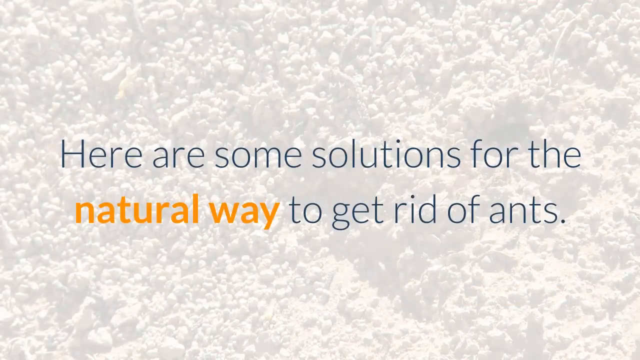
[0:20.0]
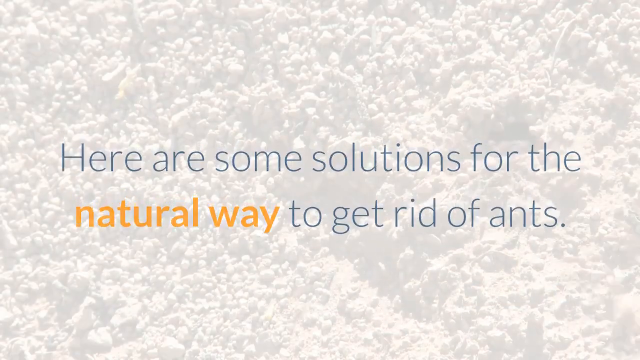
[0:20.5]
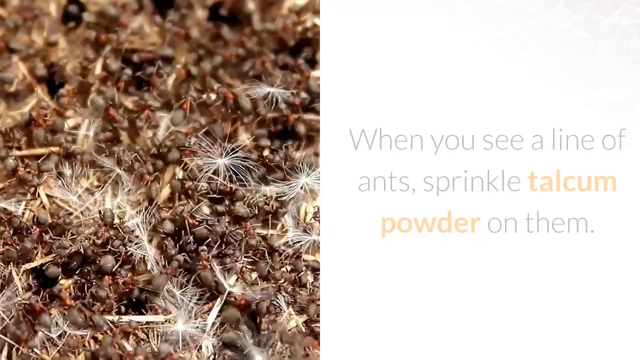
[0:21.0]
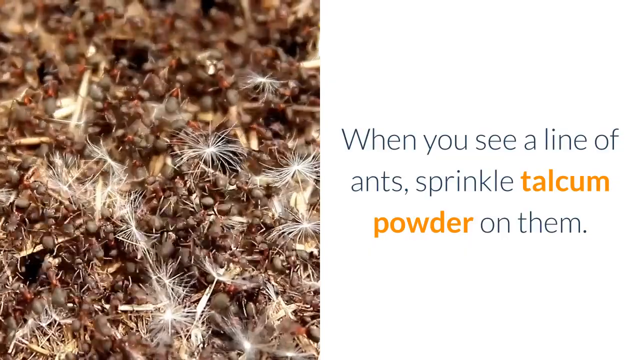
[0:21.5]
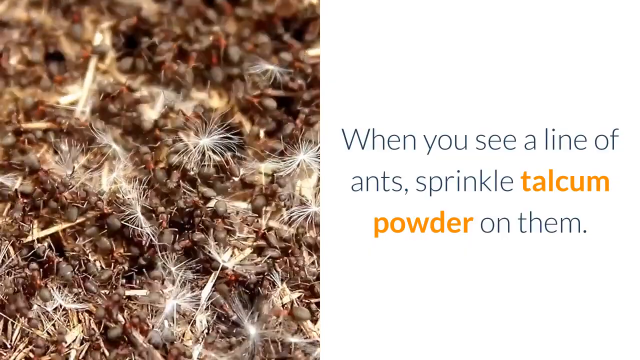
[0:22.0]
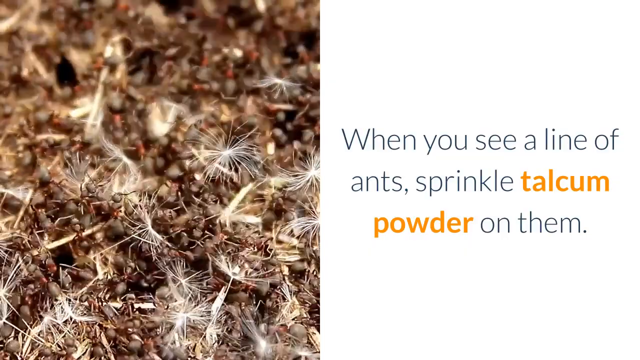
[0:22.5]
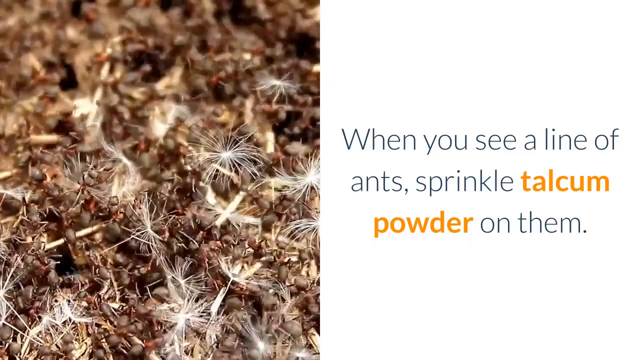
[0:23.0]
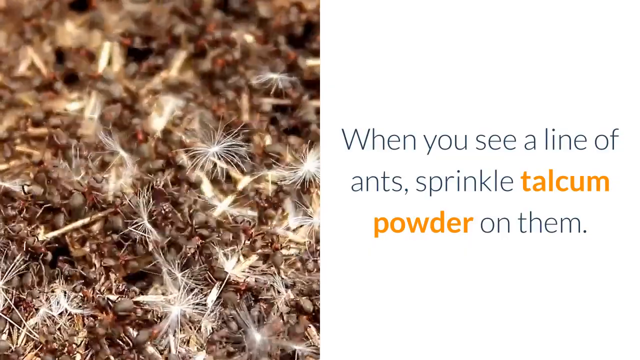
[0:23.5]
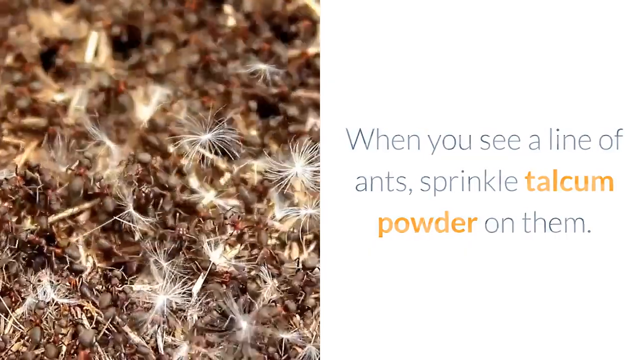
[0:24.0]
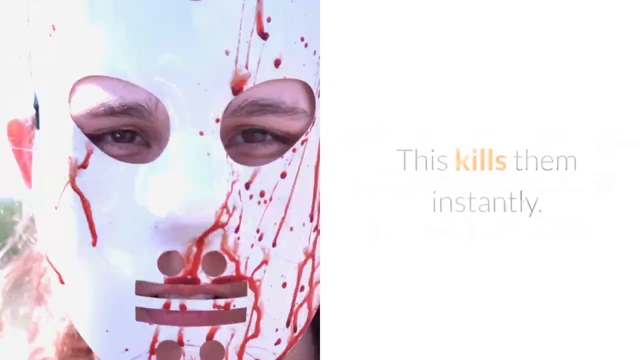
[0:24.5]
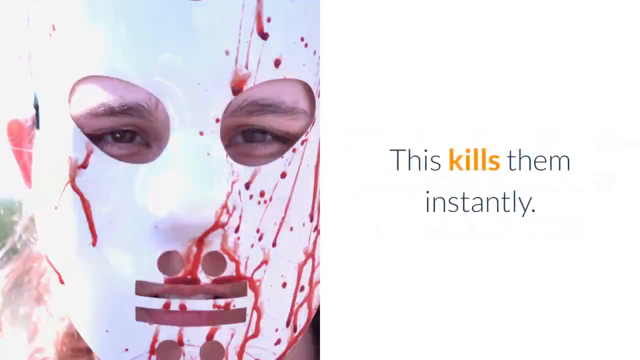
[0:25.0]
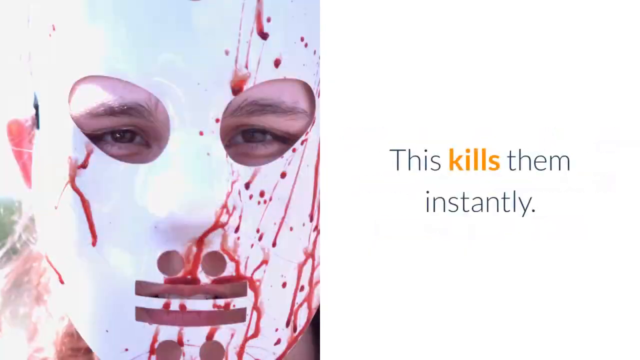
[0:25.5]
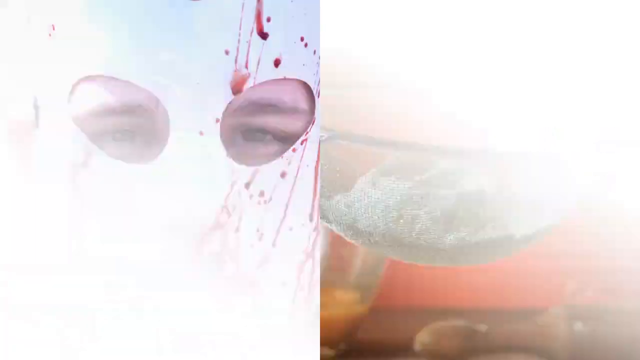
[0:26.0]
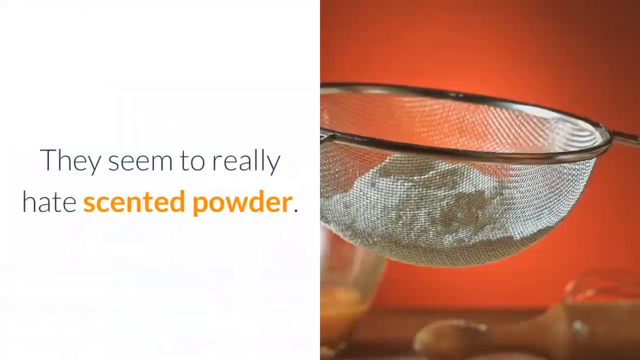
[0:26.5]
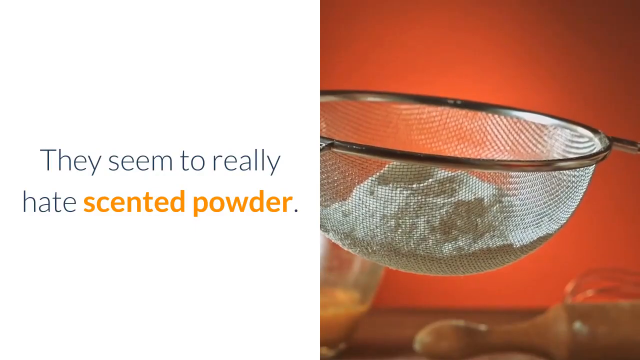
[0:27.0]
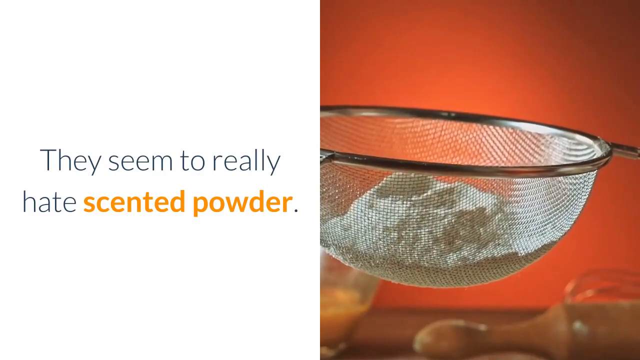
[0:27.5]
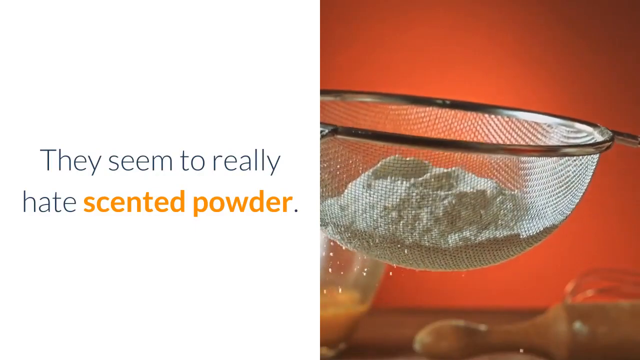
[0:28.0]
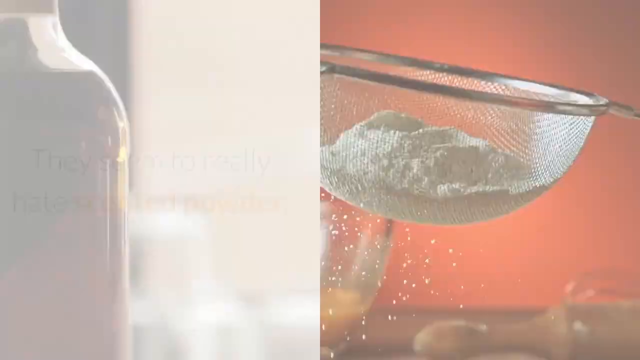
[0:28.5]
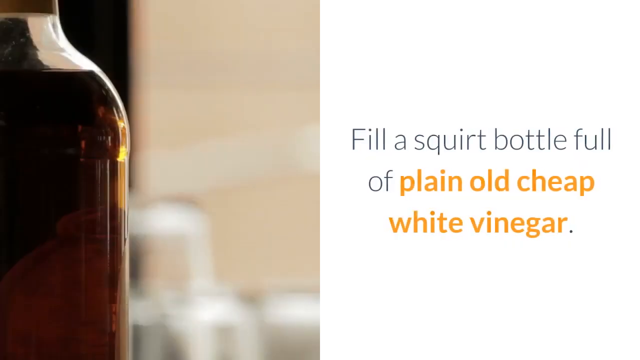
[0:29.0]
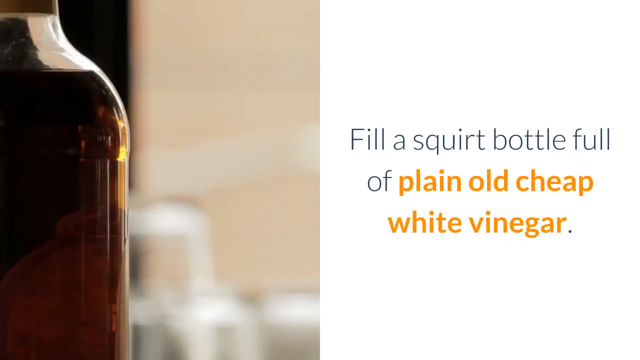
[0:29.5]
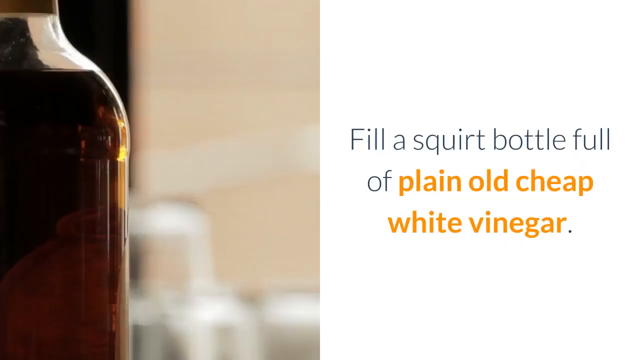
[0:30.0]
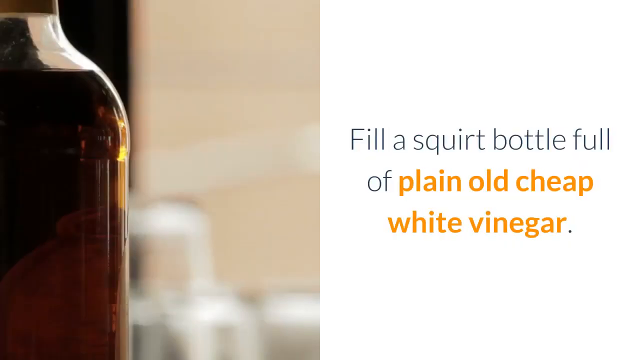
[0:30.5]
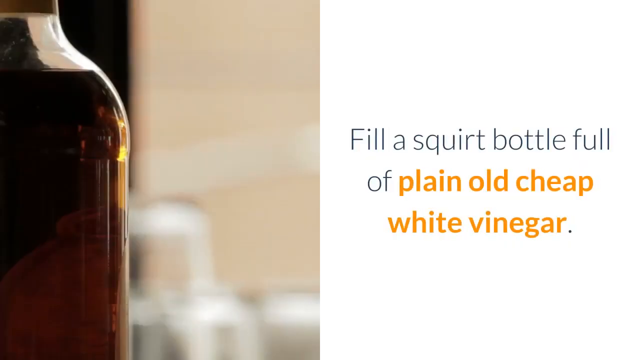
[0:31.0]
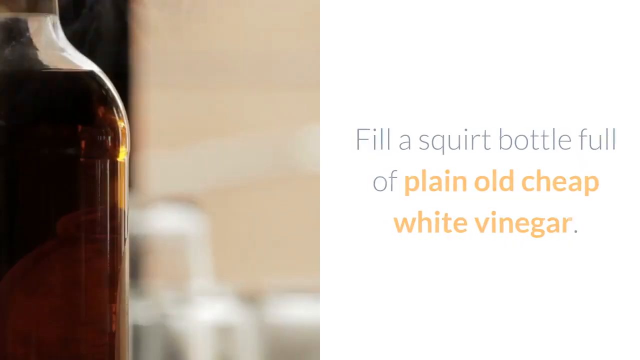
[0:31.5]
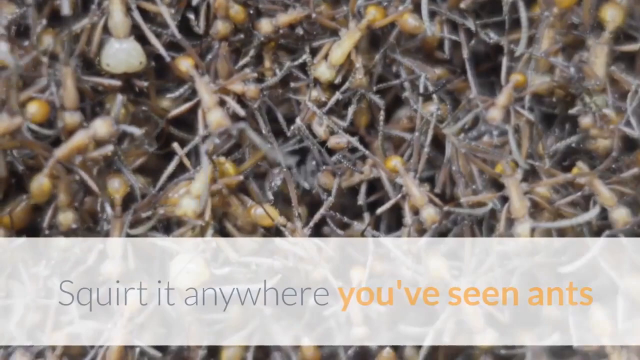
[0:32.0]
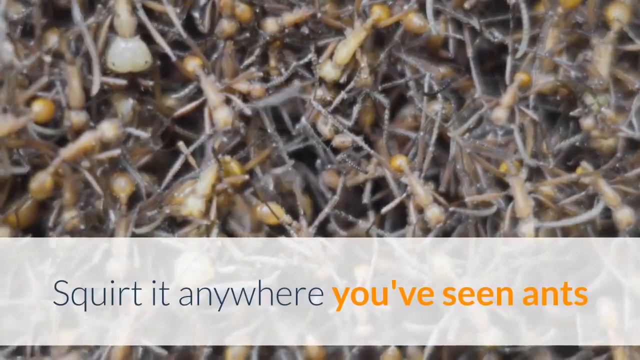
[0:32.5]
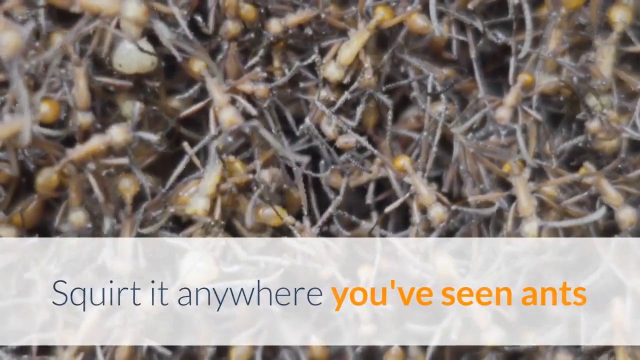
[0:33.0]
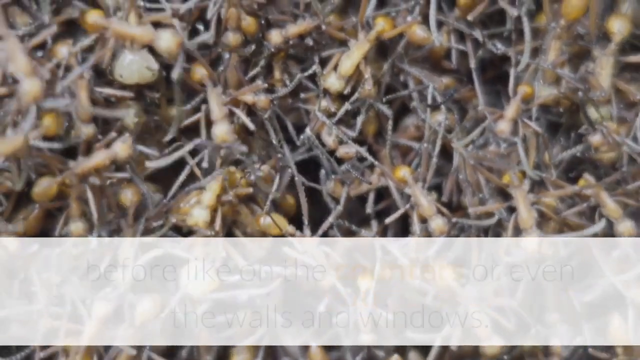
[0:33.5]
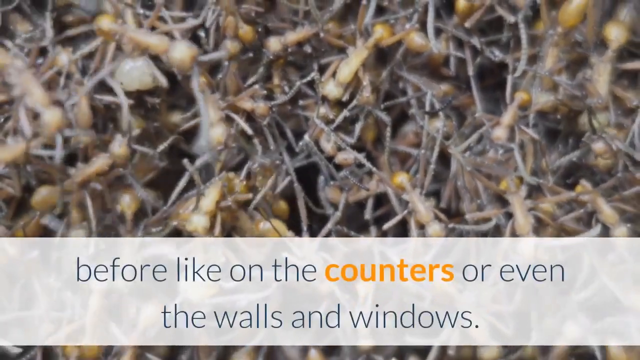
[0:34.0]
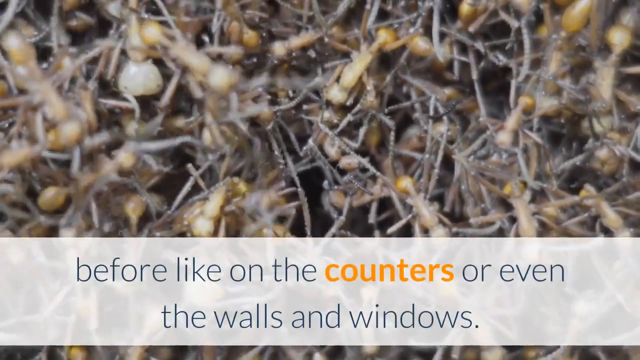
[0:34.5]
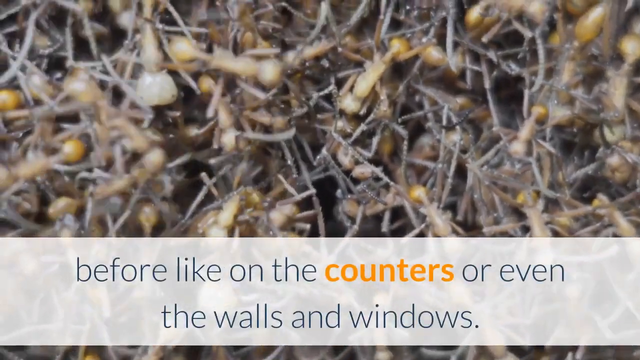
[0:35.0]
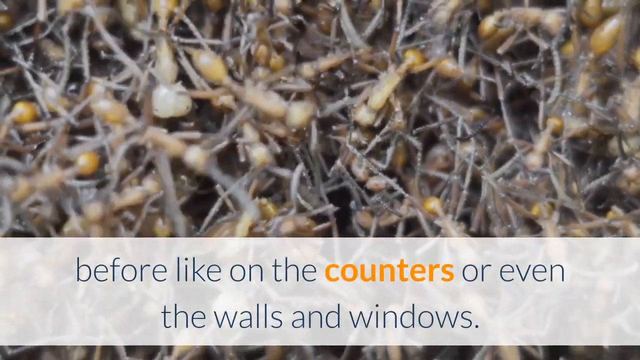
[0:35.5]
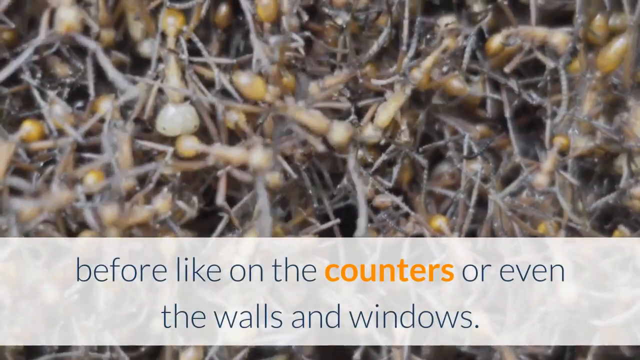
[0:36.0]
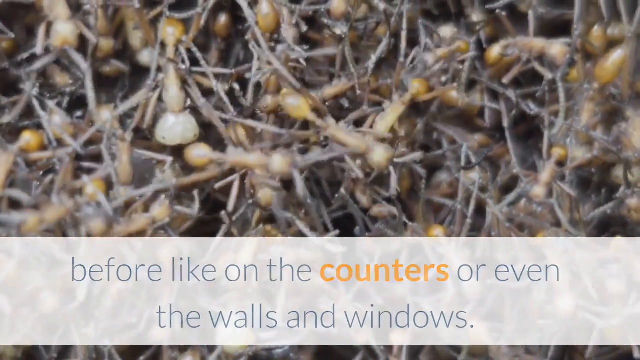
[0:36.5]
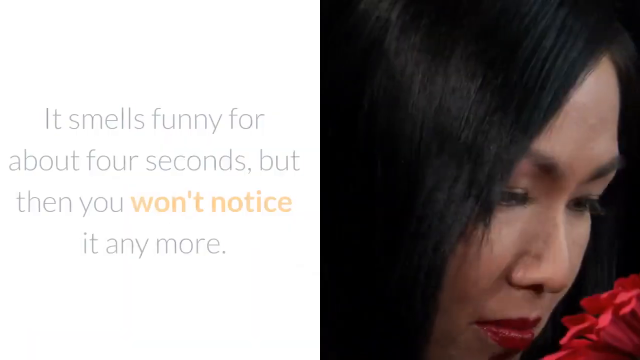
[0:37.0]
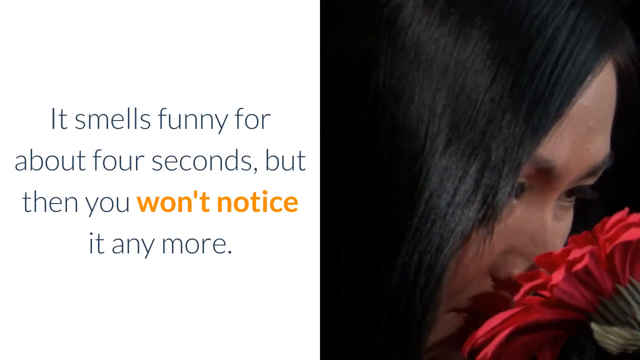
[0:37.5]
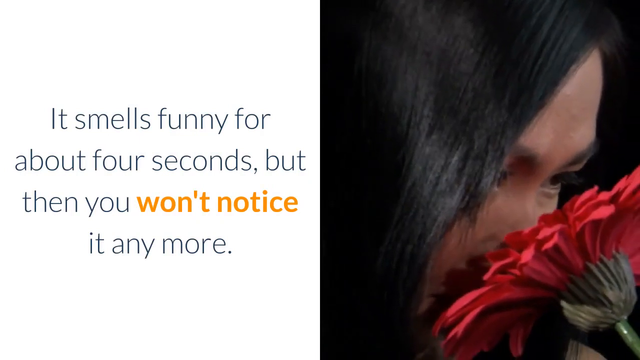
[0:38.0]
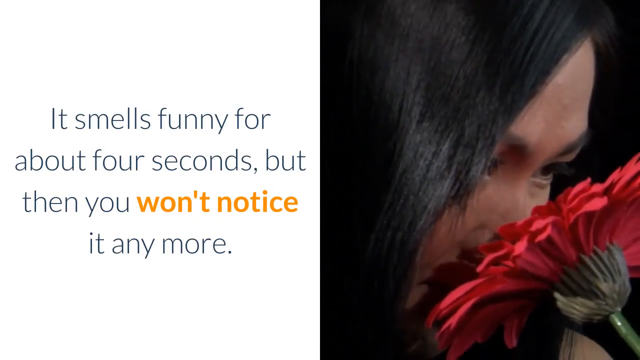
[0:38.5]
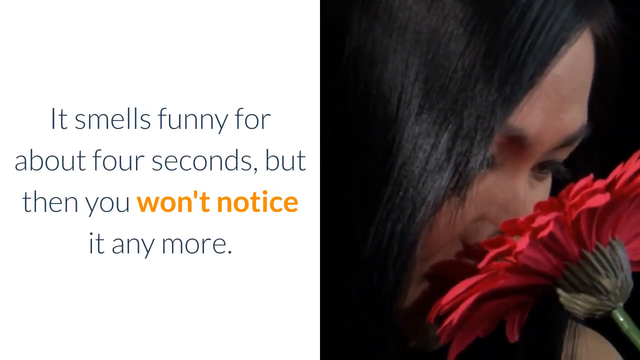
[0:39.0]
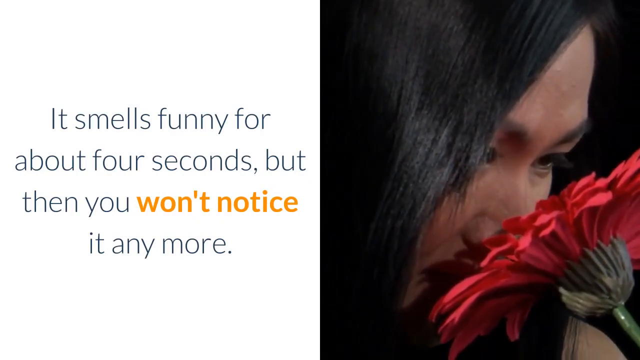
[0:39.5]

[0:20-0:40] A background that looks like dirt is so faded out that it appears almost white. In front, blue text reads "here are some solutions for the natural way to get rid of ants," with "natural way" bold and orange. Ants crawl on the left half of the screen while the right side is a white background with text. A line of ants has talcum powder sprinkled on them, and the ants crawl around the left side of the screen. Next comes a guy in a bloody mask, with text on the right reading "this kills them instantly." The left side then has a white background, and on the right a sifter with powder coming out of it appears. Another split screen shows the side of a bottle, with text on the white background on the right reading "fill a squirt bottle" and "plain old cheap white vinegar," where "plain old cheap" is in bold orange. A close view of ants follows with text reading "squirt anywhere you see ants," and the ants crawl around in extreme close-up. Text on a white background on the left then mentions the smell lasting about four seconds and reads "then you won't notice it anymore," while on the right someone sniffs a big red flower.